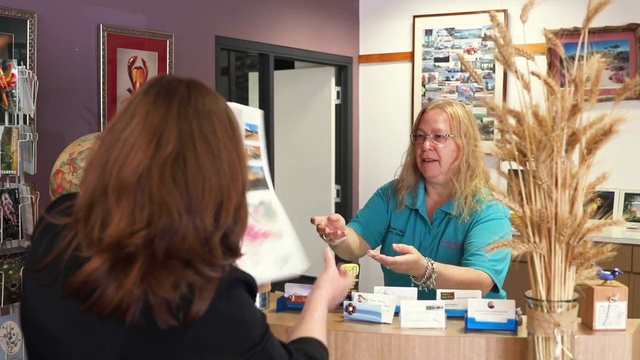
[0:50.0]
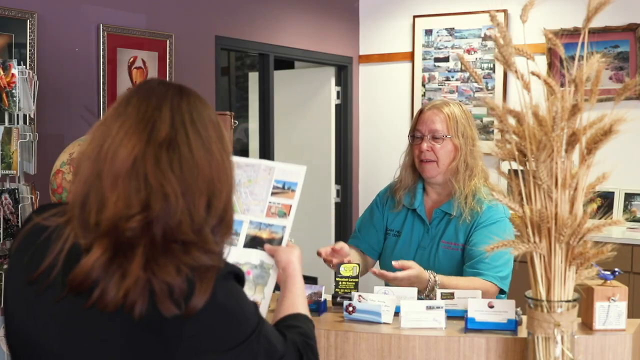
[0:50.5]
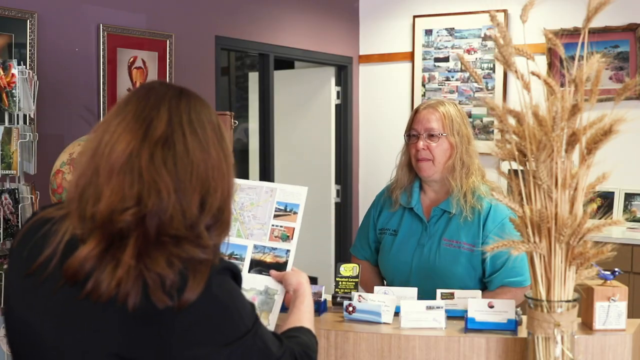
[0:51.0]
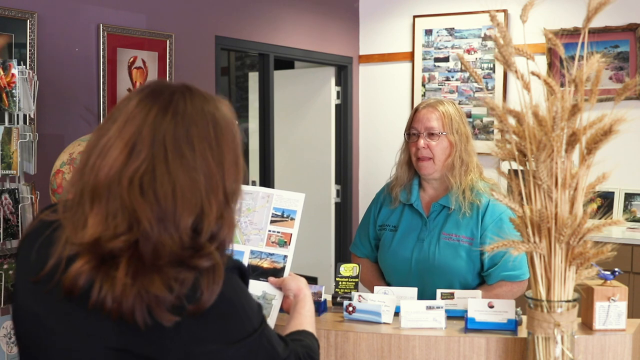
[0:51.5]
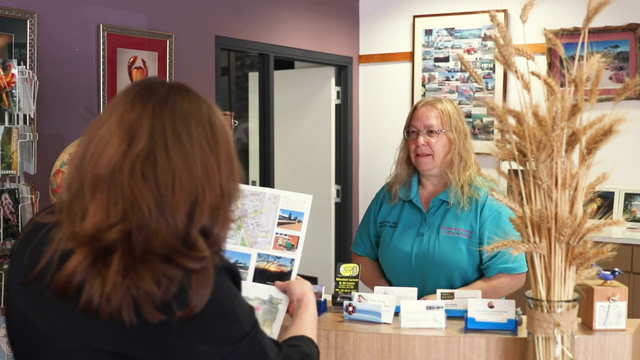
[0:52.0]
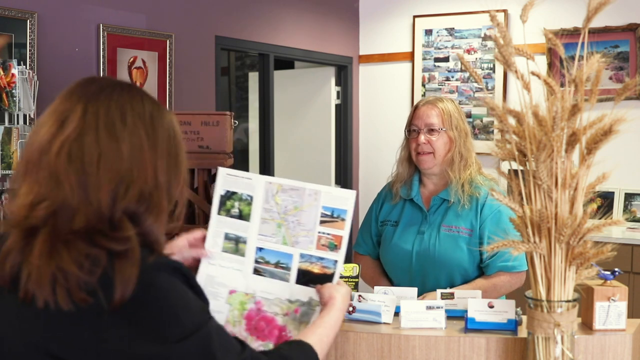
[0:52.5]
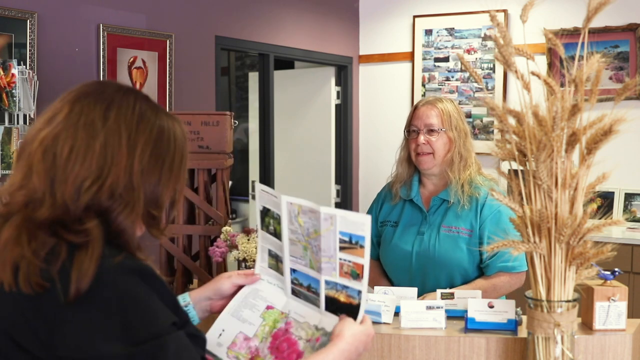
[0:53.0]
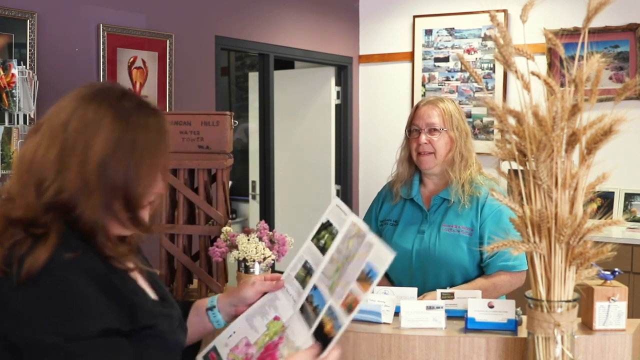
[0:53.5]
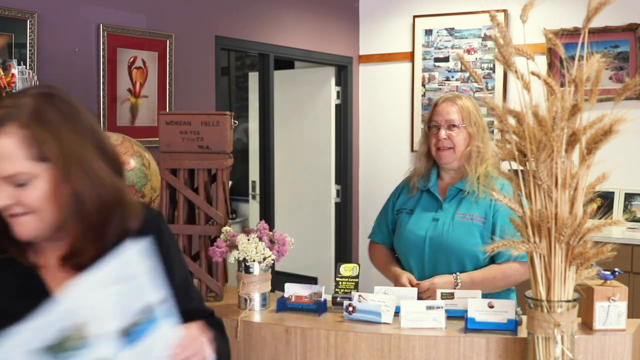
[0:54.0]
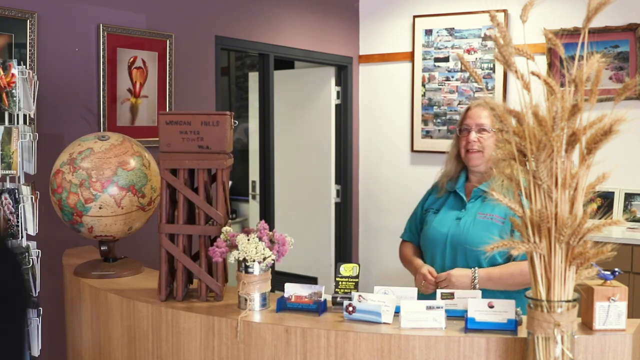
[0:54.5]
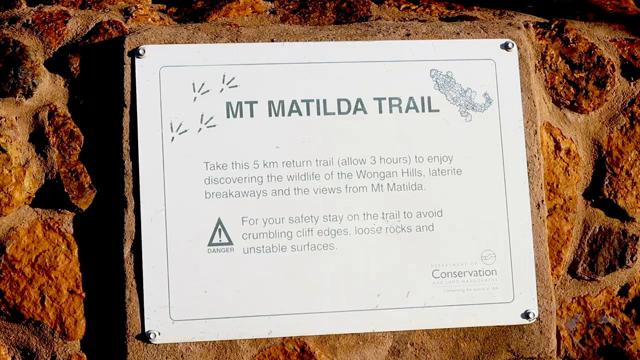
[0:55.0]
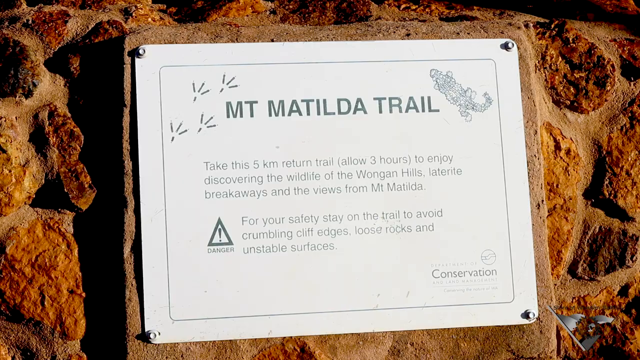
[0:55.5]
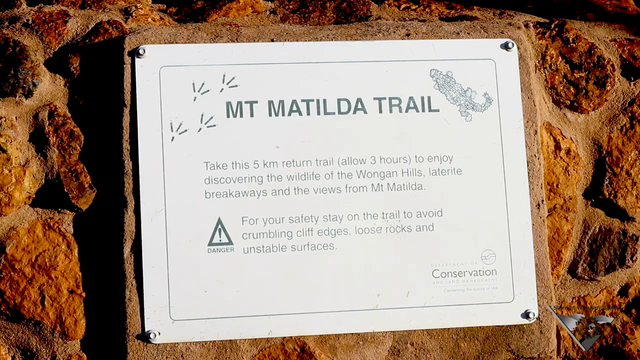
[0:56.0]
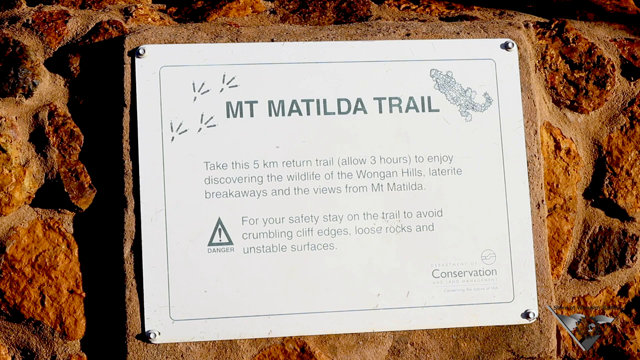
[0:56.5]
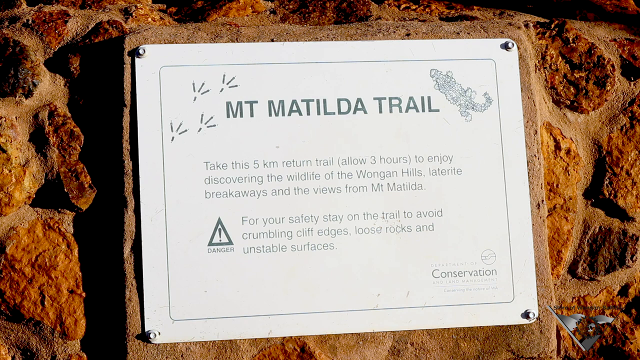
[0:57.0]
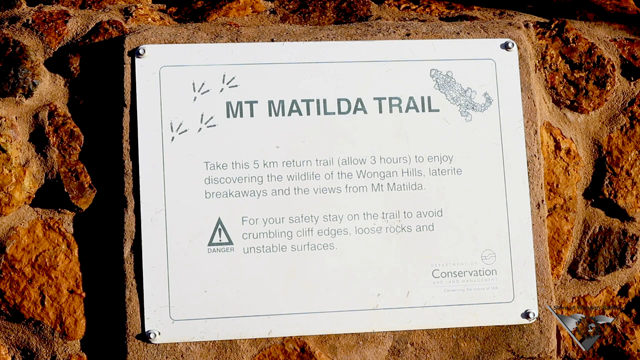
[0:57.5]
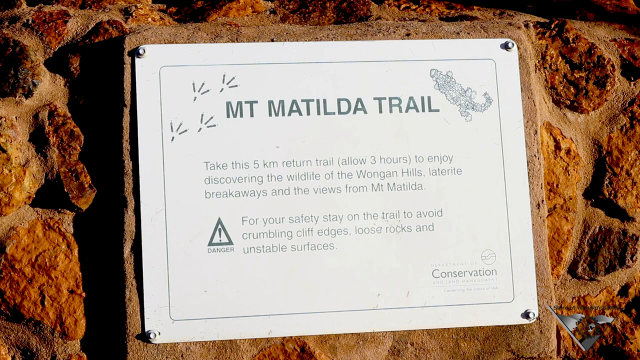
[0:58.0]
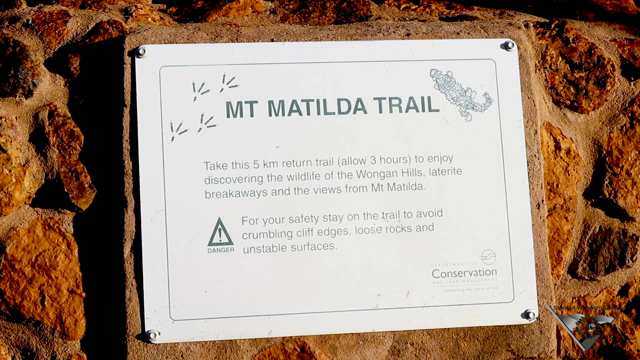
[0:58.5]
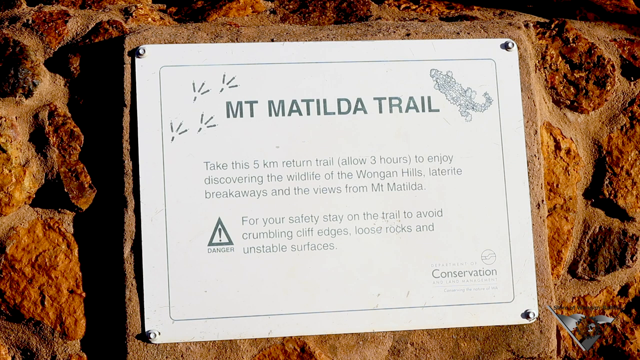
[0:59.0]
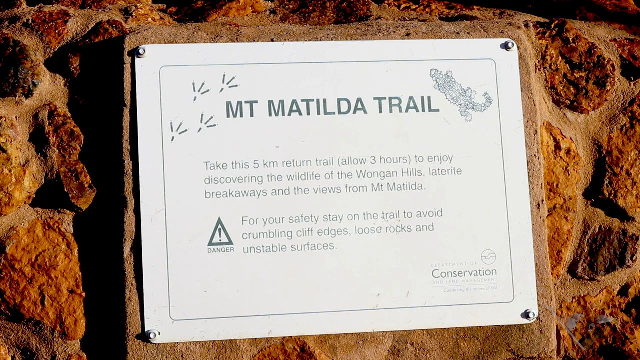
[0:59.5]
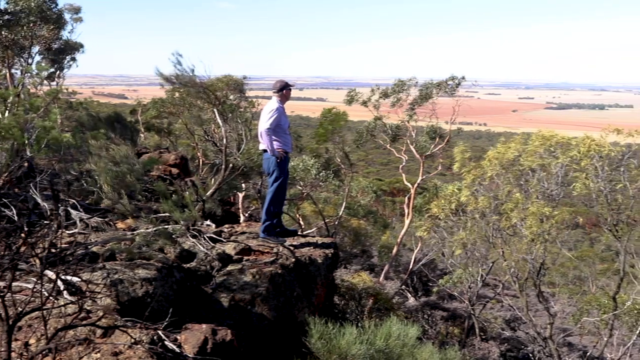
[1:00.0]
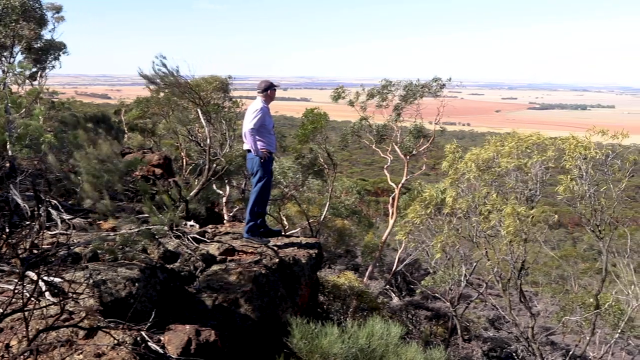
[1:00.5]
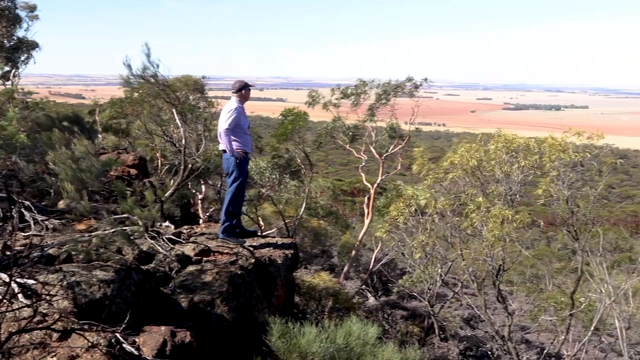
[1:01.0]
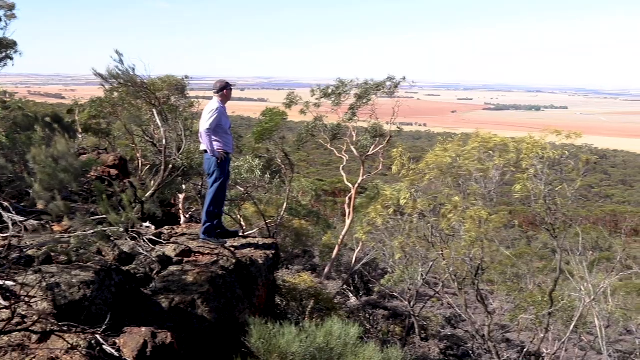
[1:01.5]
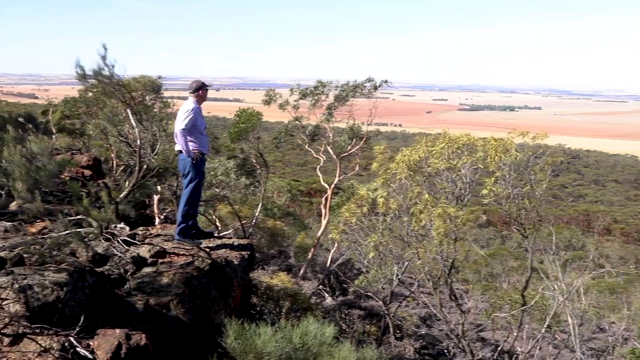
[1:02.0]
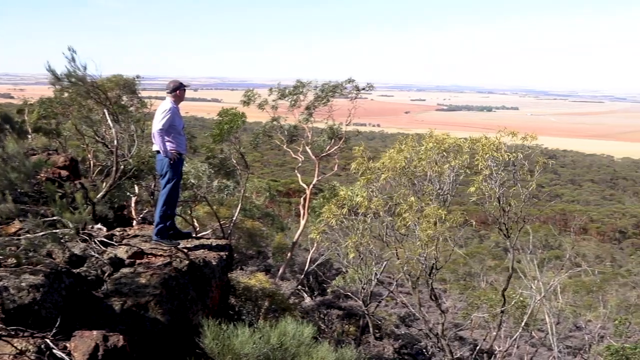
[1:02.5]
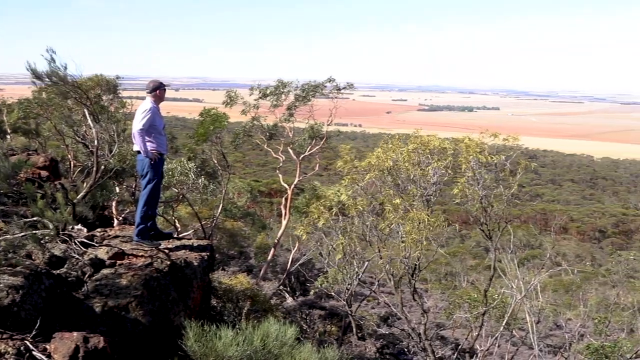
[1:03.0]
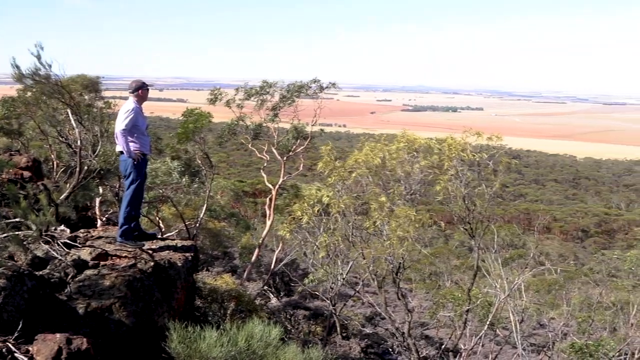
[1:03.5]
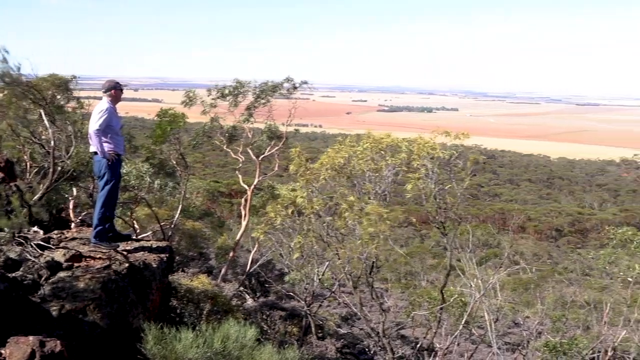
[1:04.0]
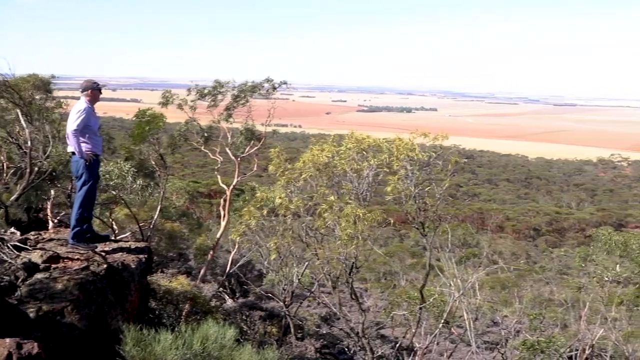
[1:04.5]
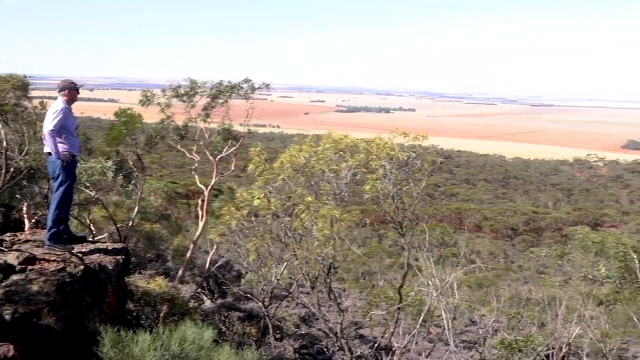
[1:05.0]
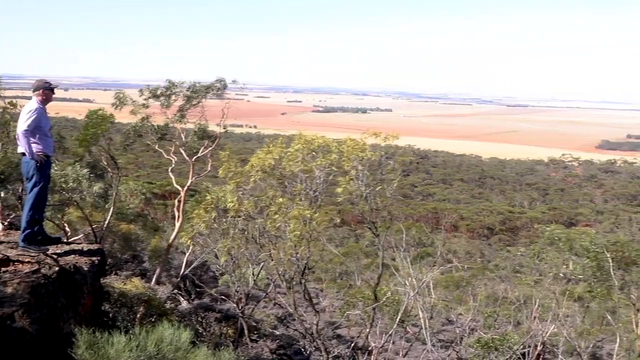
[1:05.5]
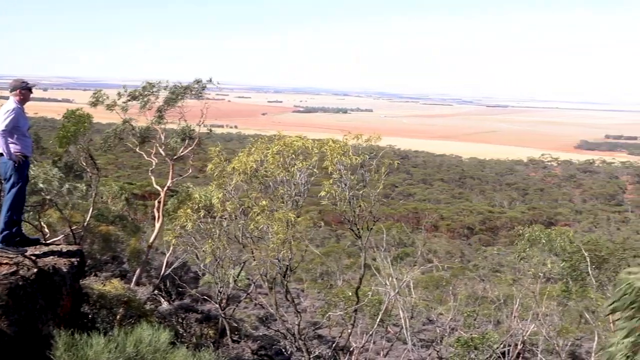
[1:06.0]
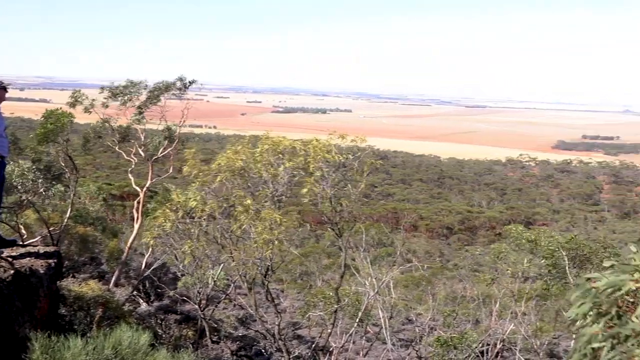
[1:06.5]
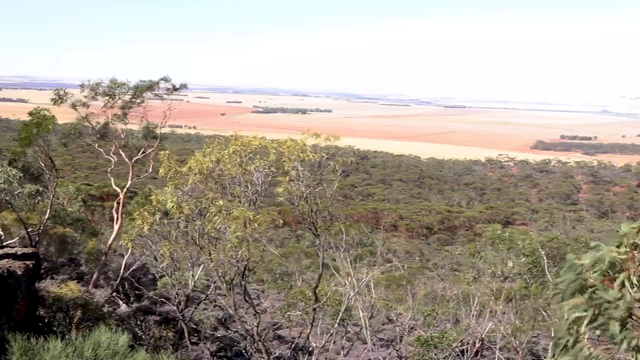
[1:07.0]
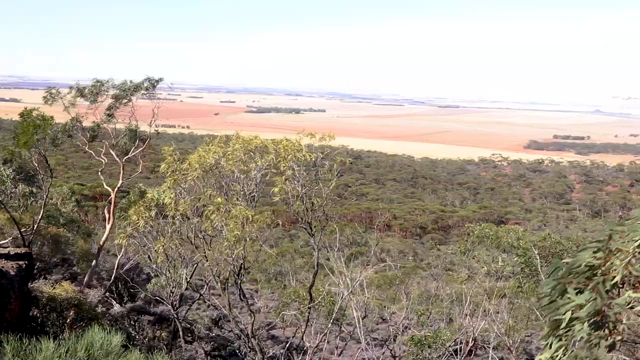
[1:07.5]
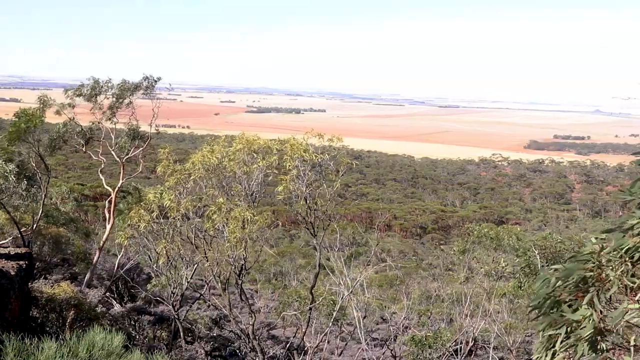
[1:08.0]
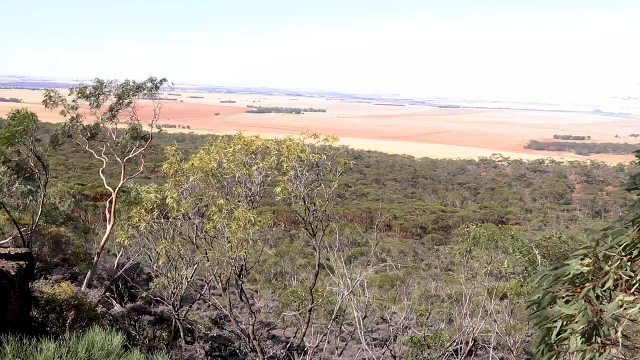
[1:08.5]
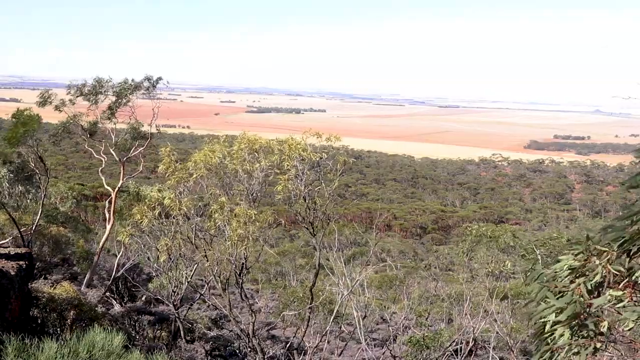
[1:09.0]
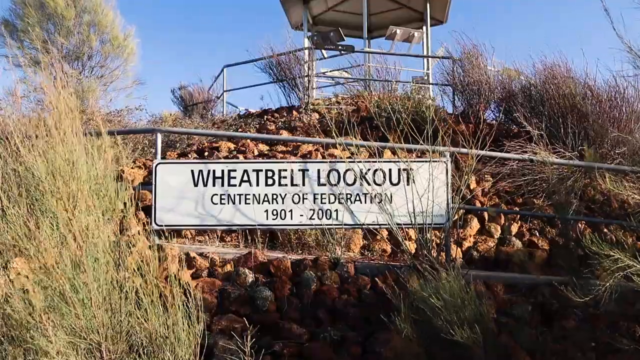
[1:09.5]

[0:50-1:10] The older blonde-haired woman is behind a counter handing a map or brochure to another woman. The other woman turns away, her face briefly visible on camera; she is middle-aged and brunette, and she walks out of the scene. The video cuts to a sign that reads "MT Matilda Trail. Take this five kilometer return". Next, a man stands on a hillside overlooking a valley, with trees in the distance and scrub trees around. Finally, the camera looks up a hill at Wheat Belt Lookout, which is kind of like a little viewing stand on top of the hill.